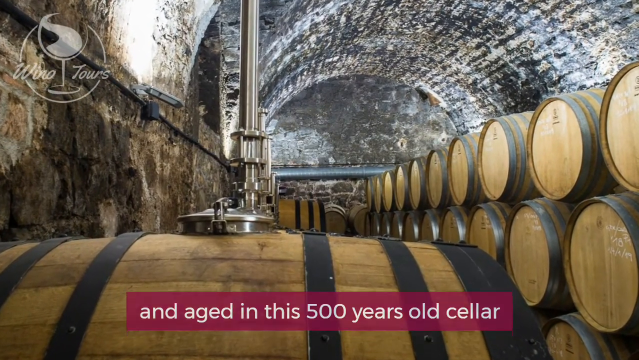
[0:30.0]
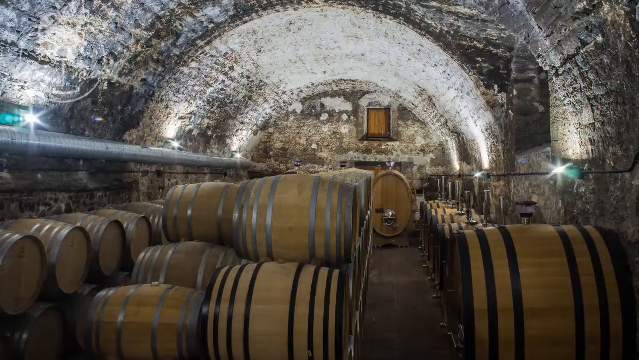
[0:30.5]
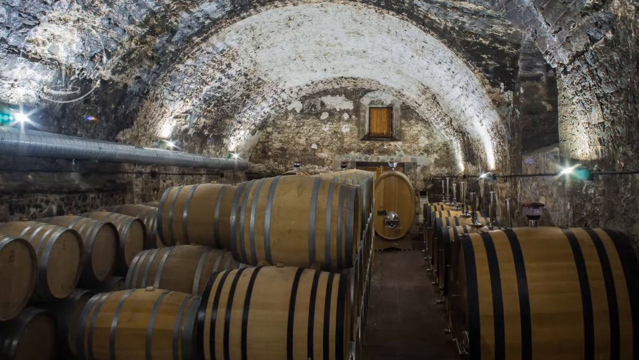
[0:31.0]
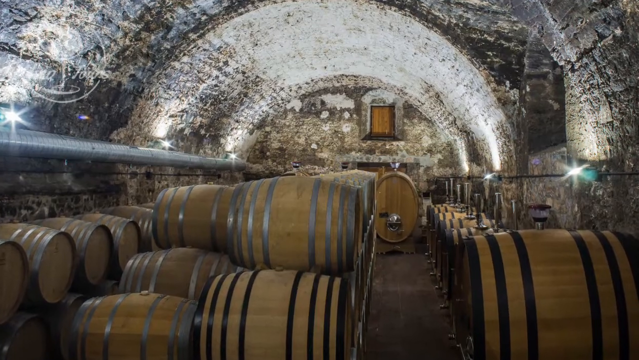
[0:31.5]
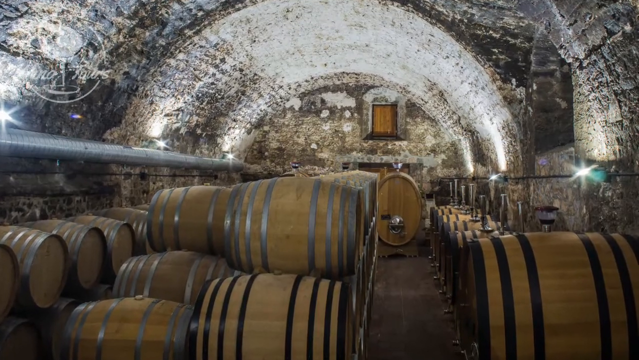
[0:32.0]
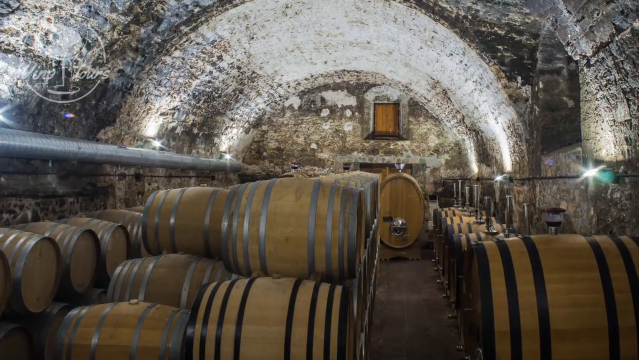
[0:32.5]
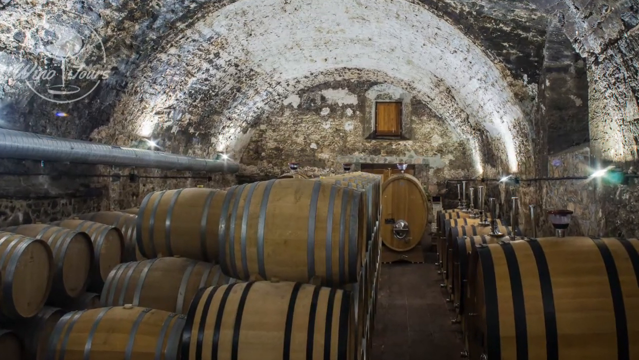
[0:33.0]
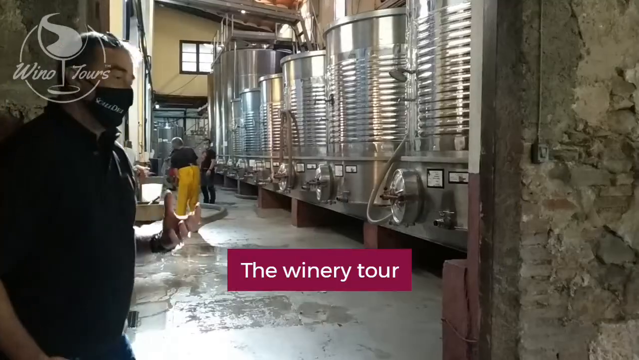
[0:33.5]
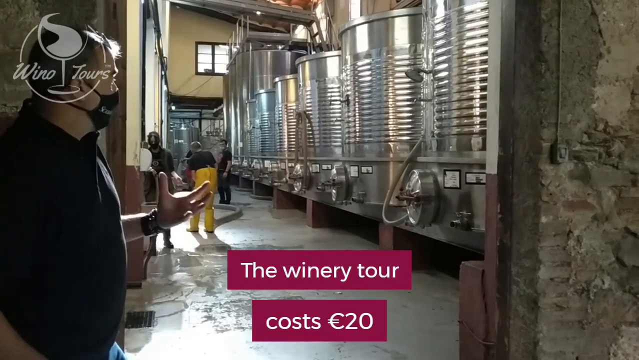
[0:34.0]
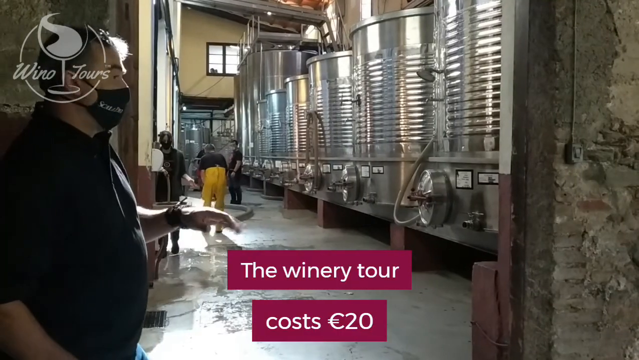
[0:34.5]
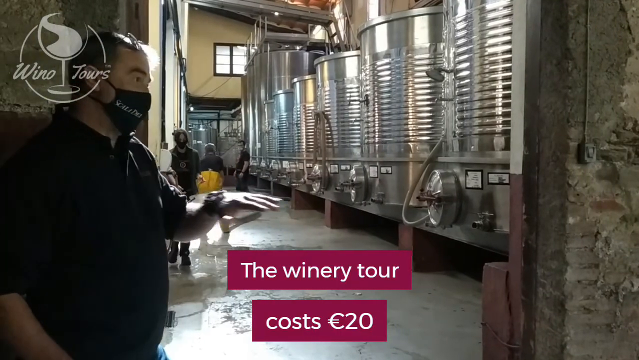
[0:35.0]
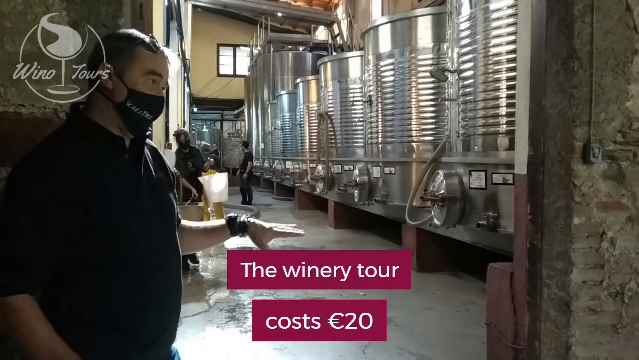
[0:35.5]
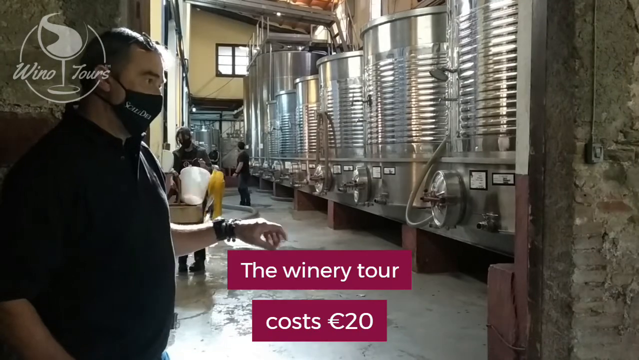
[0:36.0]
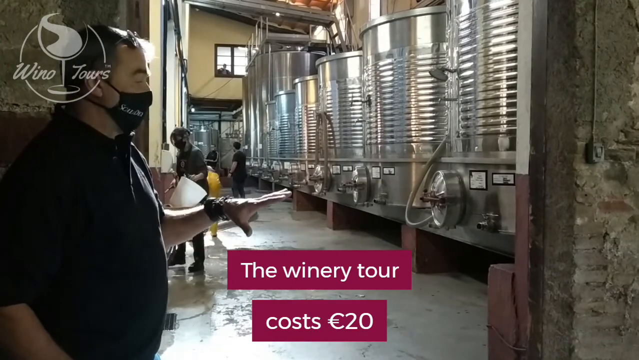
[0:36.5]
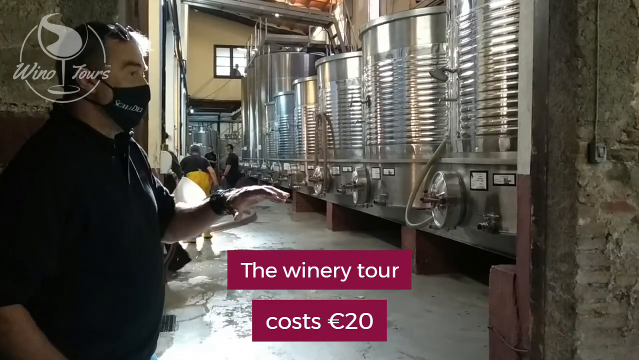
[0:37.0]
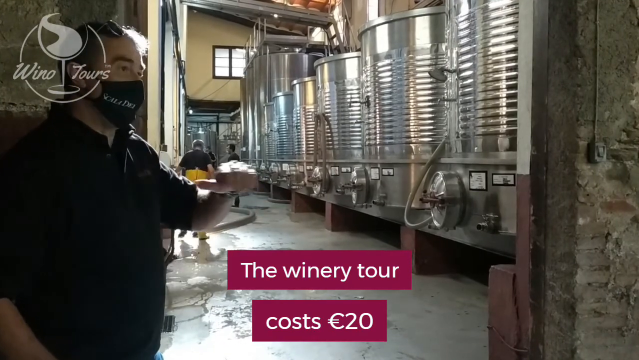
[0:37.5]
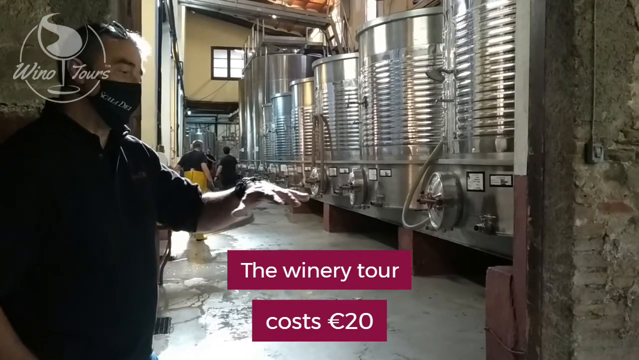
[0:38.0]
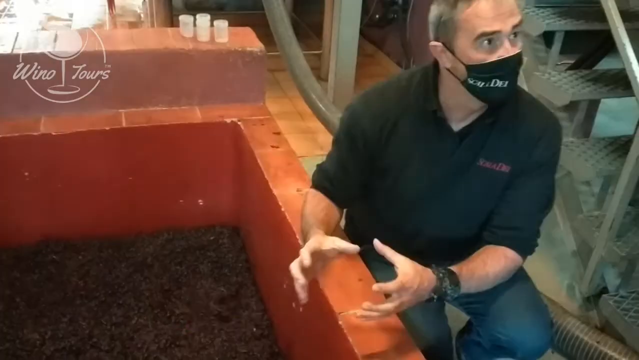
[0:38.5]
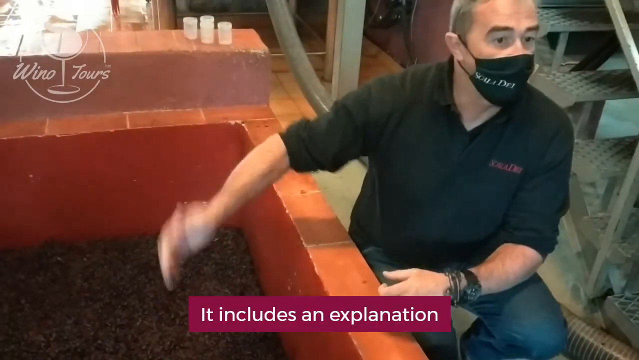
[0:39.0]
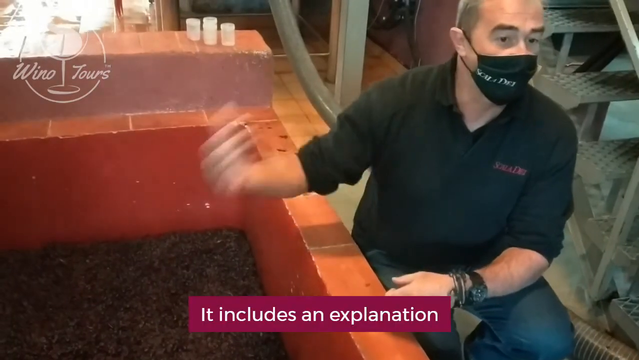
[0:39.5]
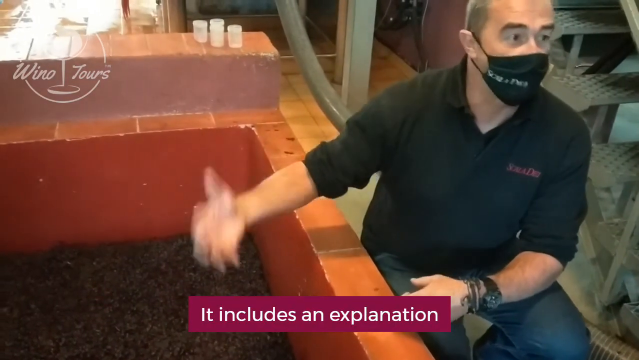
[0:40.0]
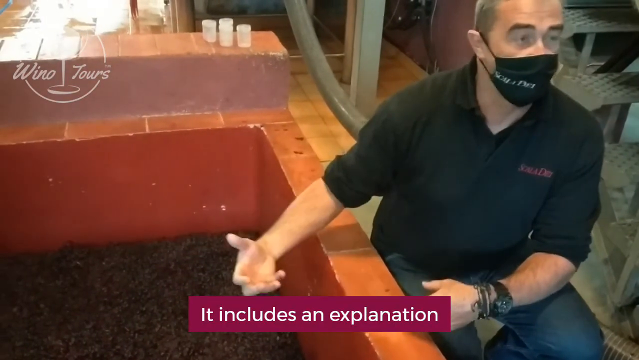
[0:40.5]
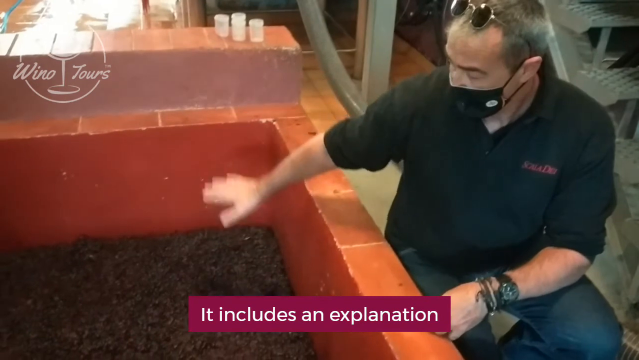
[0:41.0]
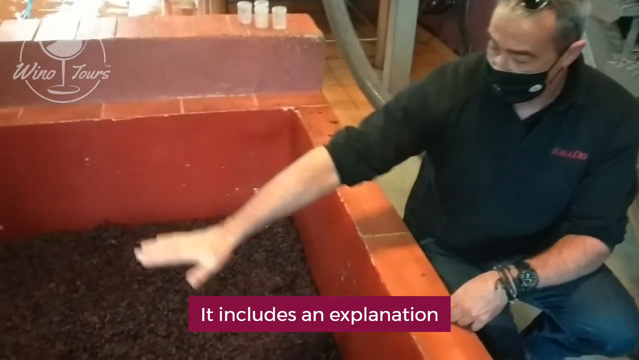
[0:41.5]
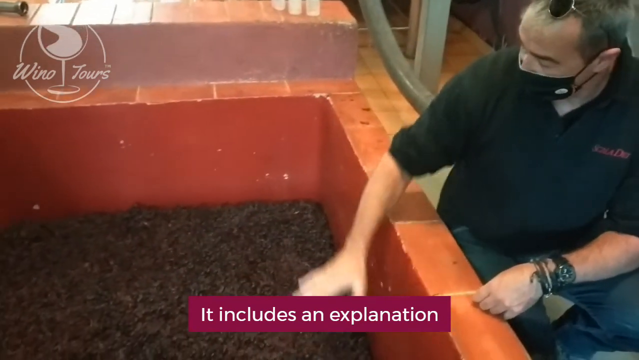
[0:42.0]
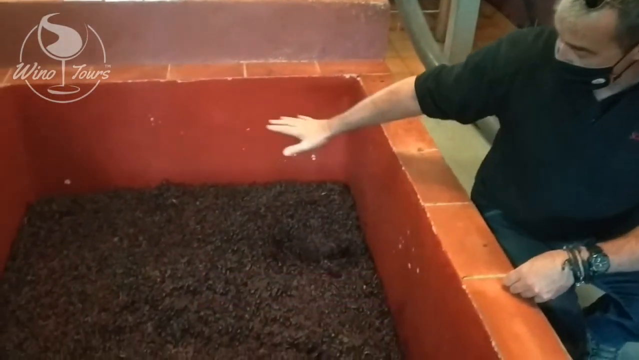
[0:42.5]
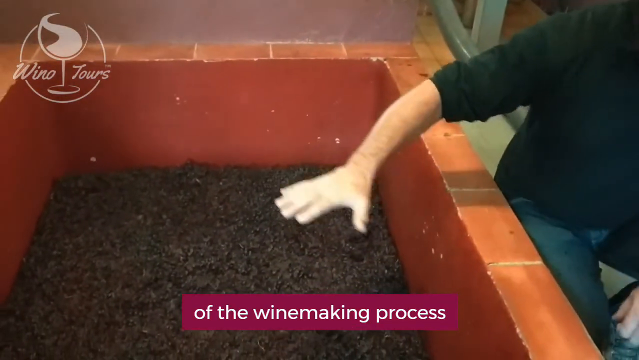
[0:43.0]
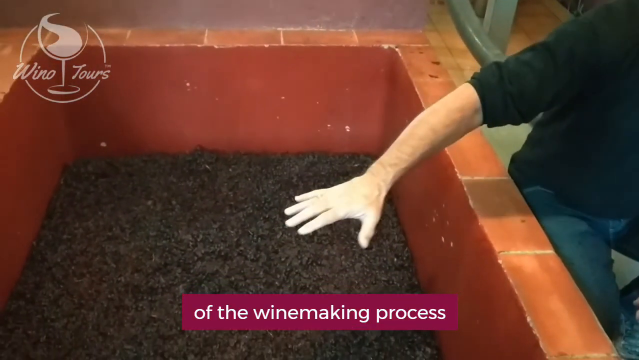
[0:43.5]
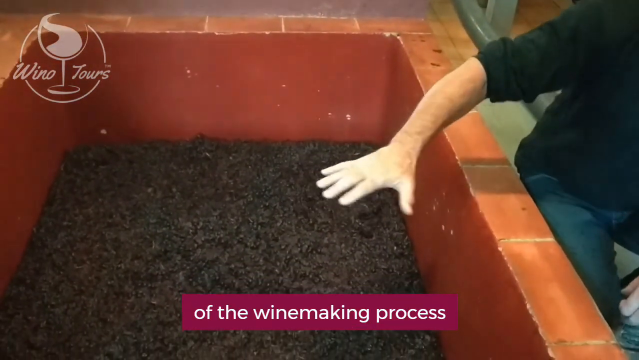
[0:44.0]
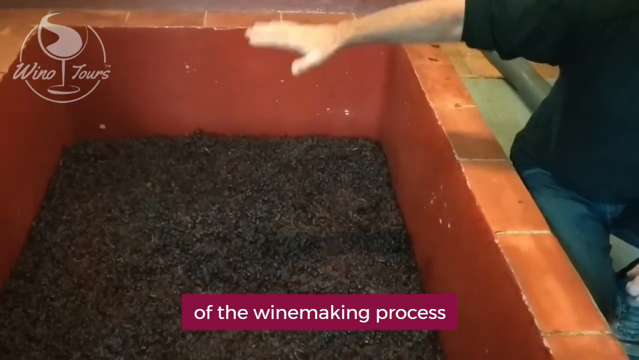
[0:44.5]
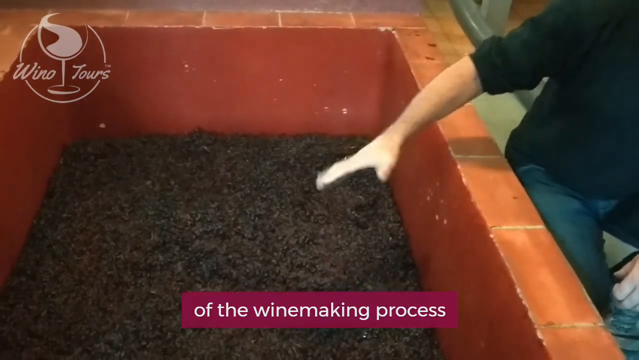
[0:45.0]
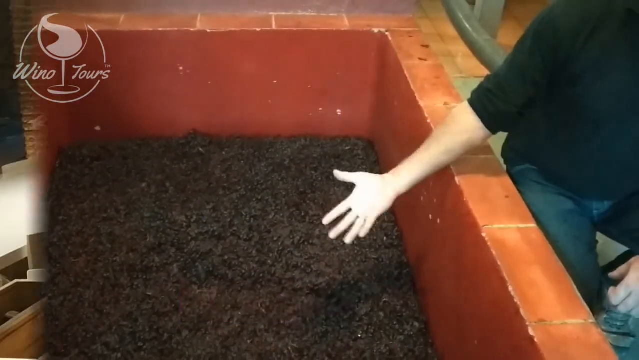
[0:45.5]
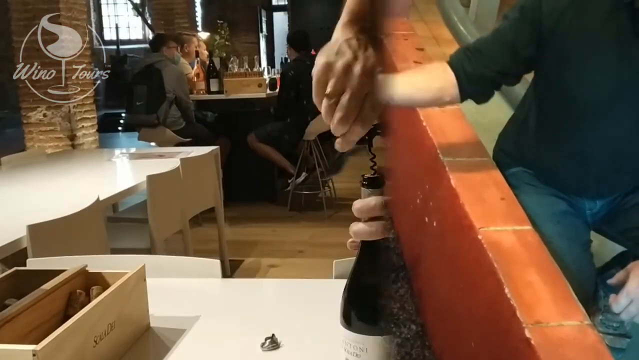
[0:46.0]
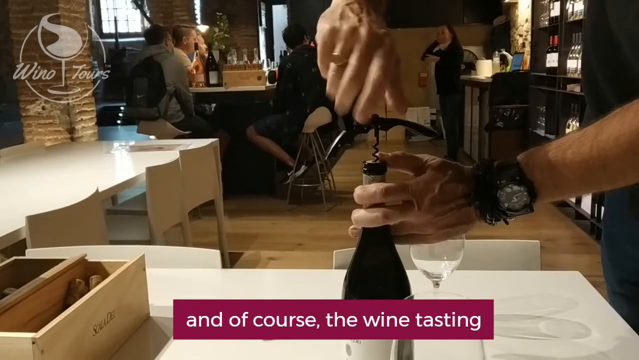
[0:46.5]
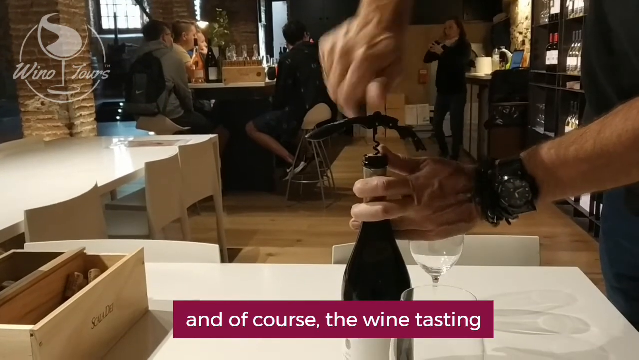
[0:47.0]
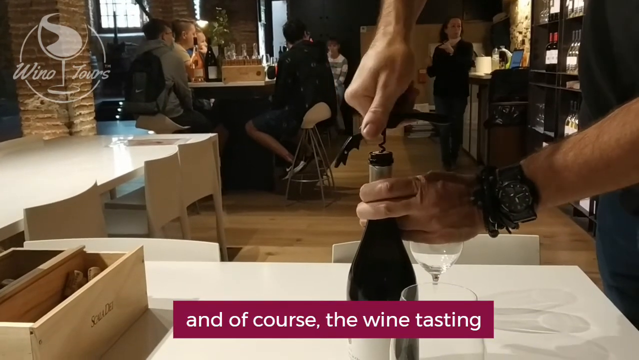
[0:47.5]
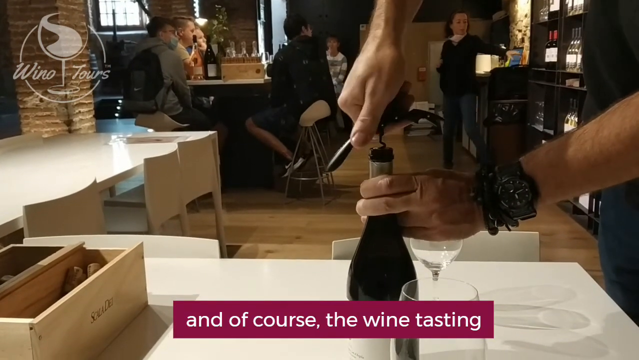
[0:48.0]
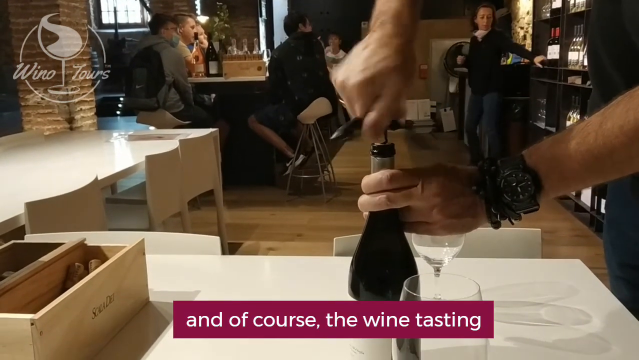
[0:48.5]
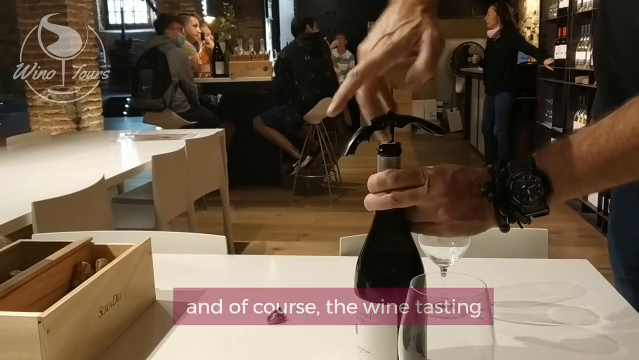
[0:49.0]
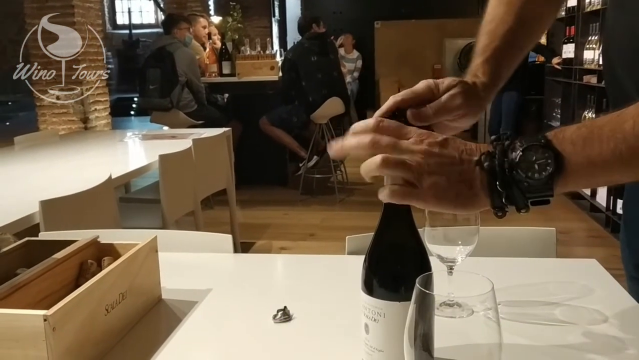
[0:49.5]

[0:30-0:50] The view continues inside the barrel-vaulted room with the wine barrels, apparently zooming in on perhaps another still image, maybe looking in a different direction or from a different angle over many, many barrels. The room is quite well lit, and there are several large barrels whose size is unclear, as there is nothing in view for scale. The view switches to a scene labeled with white text on a maroon background: "The winery tour costs 20 euros". On the left side of the screen a man wearing dark clothing is apparently talking. He is standing inside a large, well-lit room with a high ceiling, with several large metal vats in a row opposite him. He wears a face mask that might be labeled "Scala Dei". A few other people are in the background; one just hung up a bucket, so they are possibly employees. The camera then switches to a view looking into a vat, presumably of grapes, which looks like it might be made of orange tile and ceramic. A man is kneeling or seated beside the vat, using his hands as he talks off to the right side of the camera. He wears a black face mask and a black long-sleeve shirt pushed up to his elbows. The text below says "It includes an explanation of the winemaking process". The camera focuses in on the vat, and the man waves his hand over it. The view then switches to an interior, perhaps the winery itself, where people are sitting at a table in the background and a person is standing. On the left side is an empty white table with white chairs, and right in front of the camera is another white table, where a person uses a corkscrew to remove the cork from a bottle. The text says "And of course, the wine tasting".